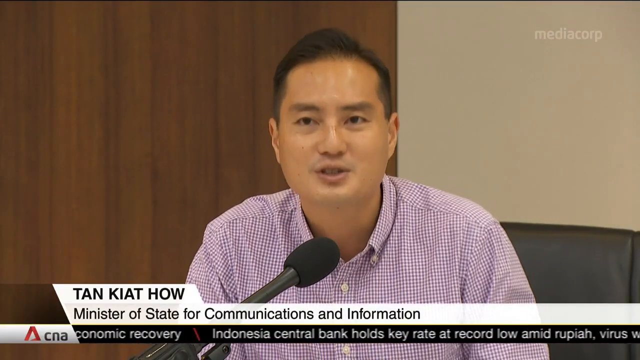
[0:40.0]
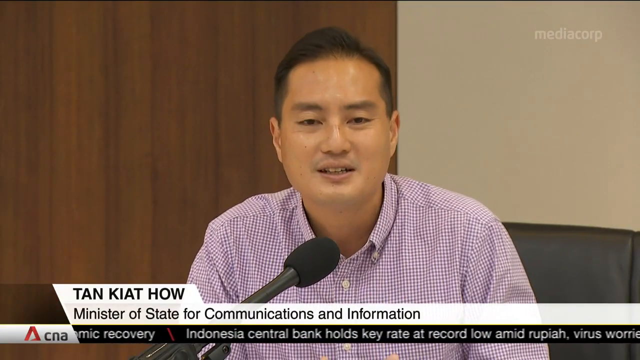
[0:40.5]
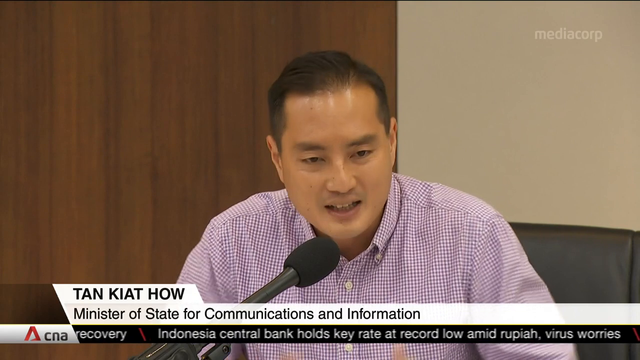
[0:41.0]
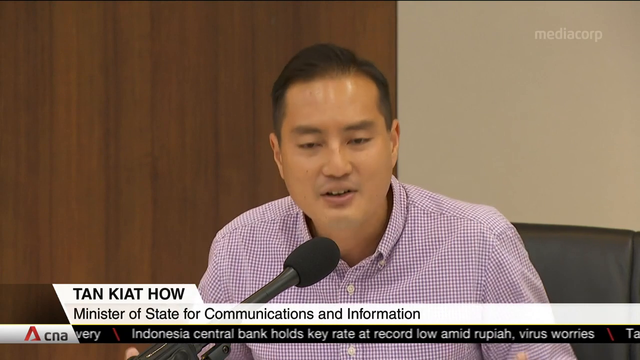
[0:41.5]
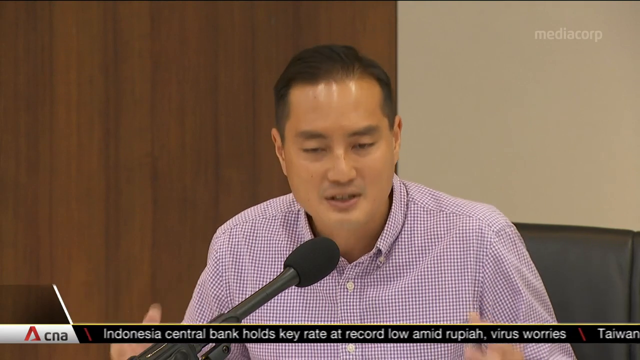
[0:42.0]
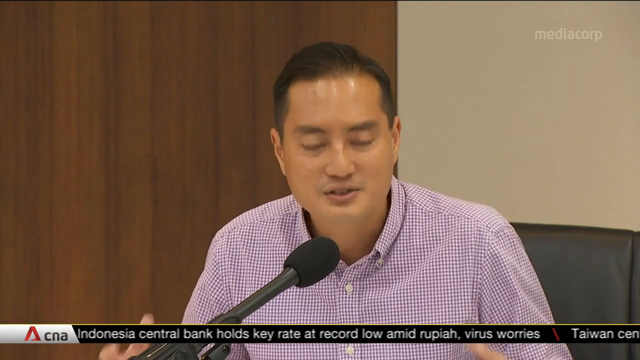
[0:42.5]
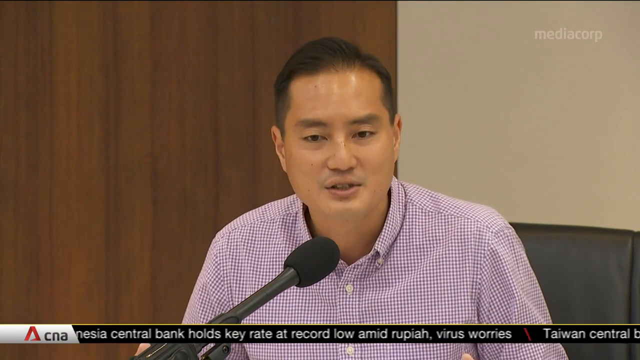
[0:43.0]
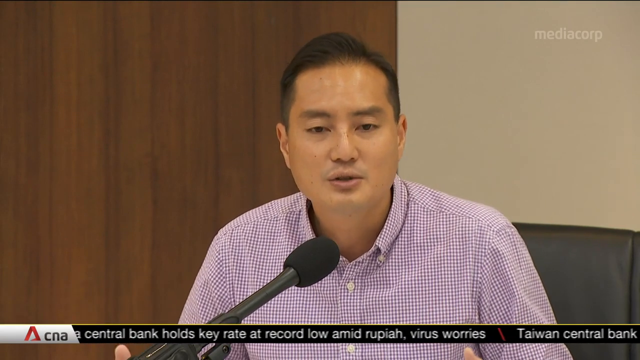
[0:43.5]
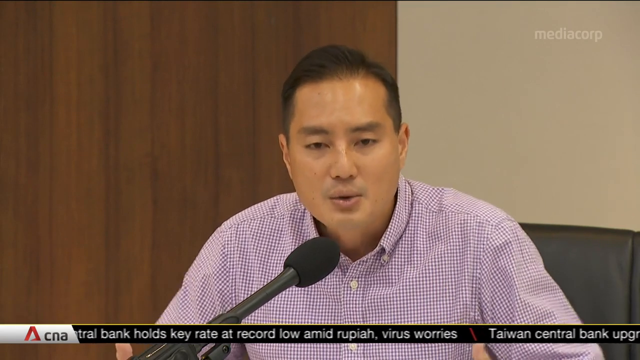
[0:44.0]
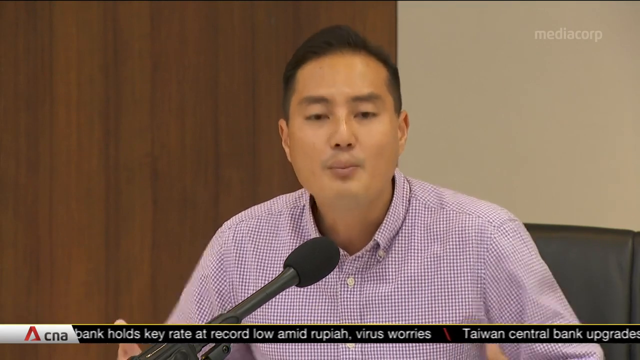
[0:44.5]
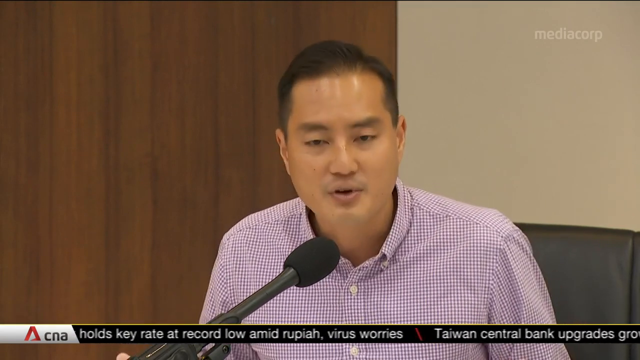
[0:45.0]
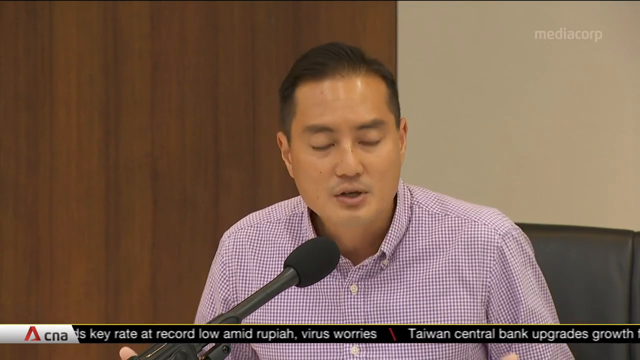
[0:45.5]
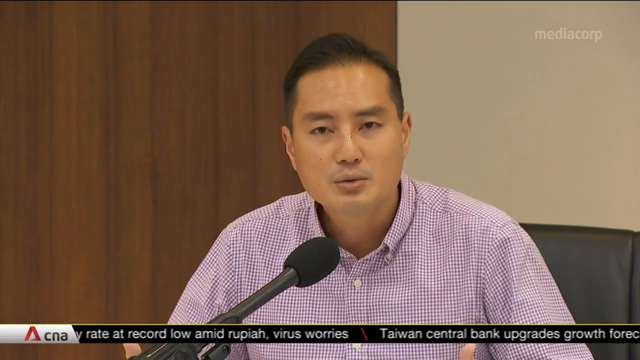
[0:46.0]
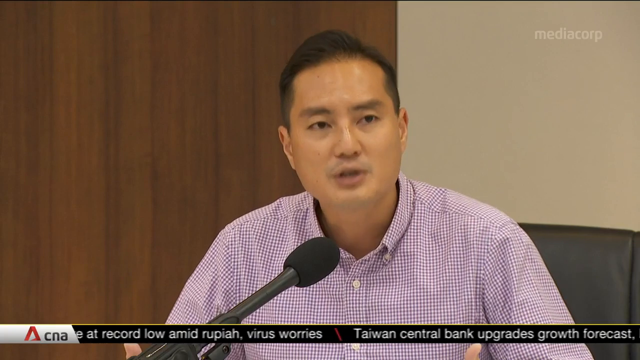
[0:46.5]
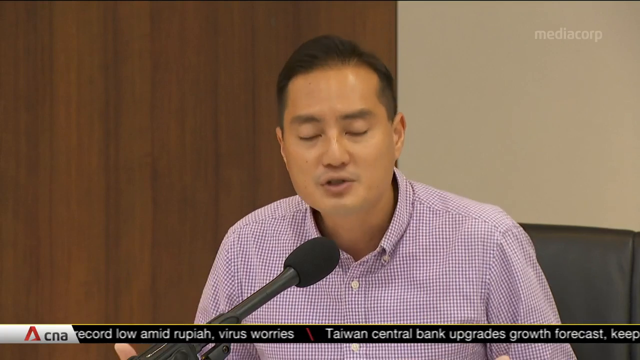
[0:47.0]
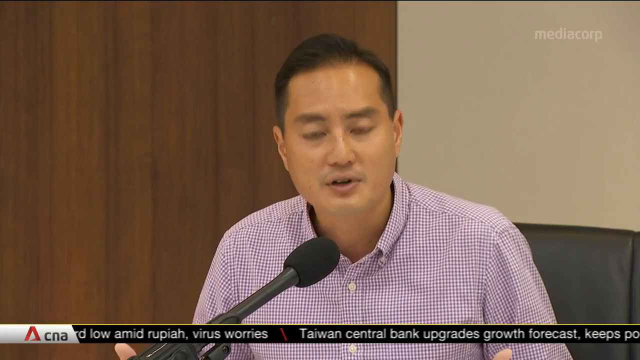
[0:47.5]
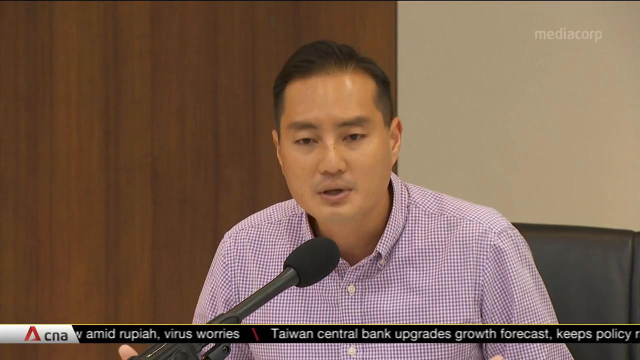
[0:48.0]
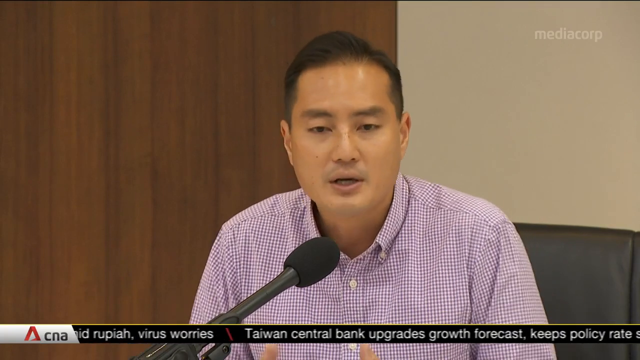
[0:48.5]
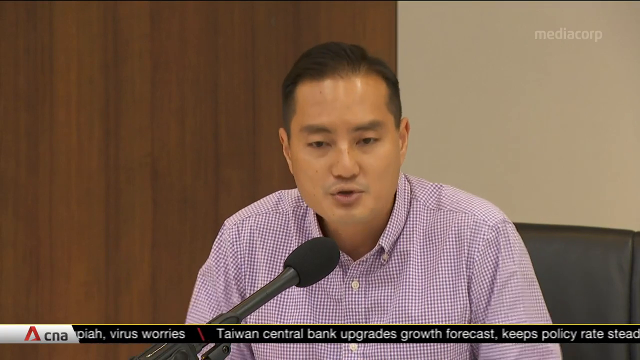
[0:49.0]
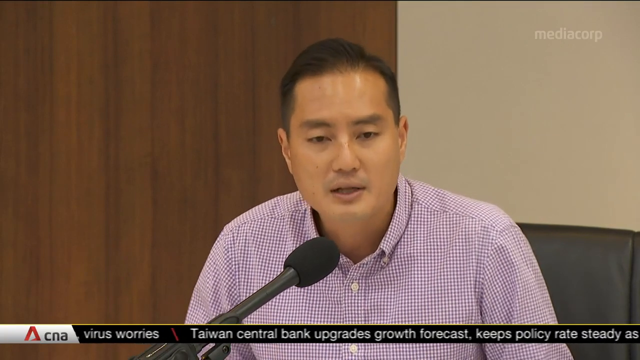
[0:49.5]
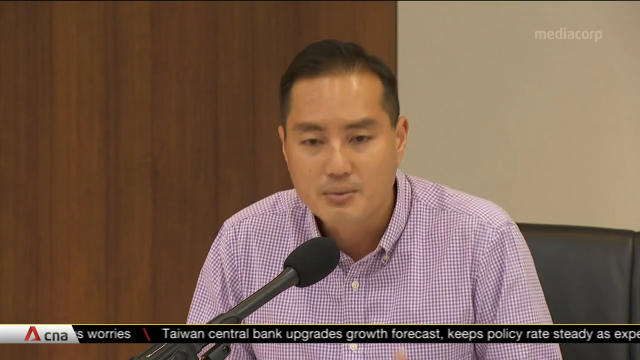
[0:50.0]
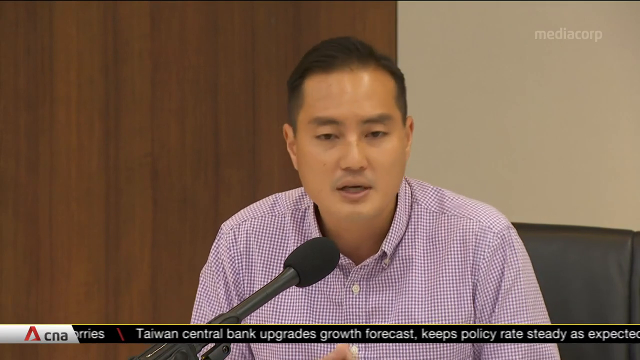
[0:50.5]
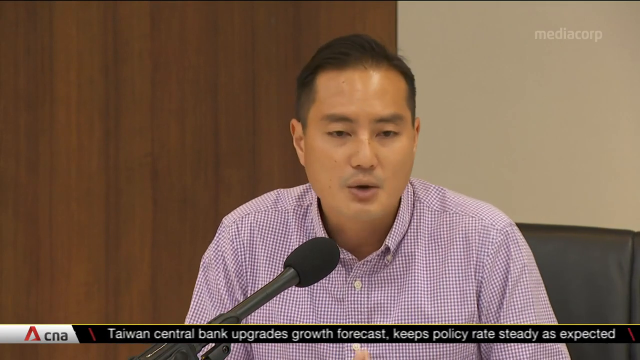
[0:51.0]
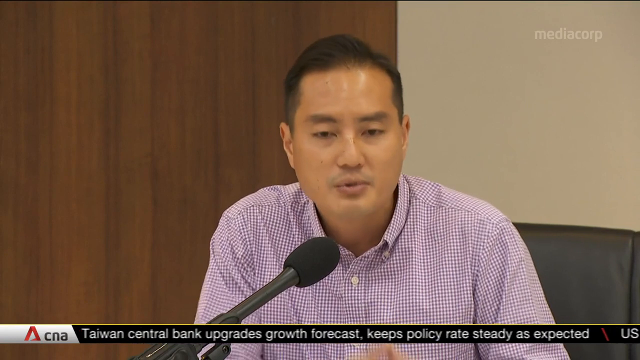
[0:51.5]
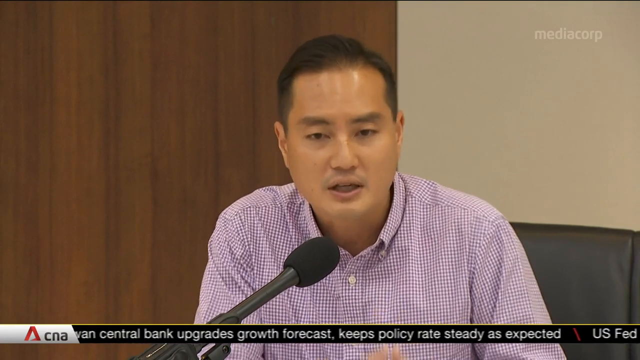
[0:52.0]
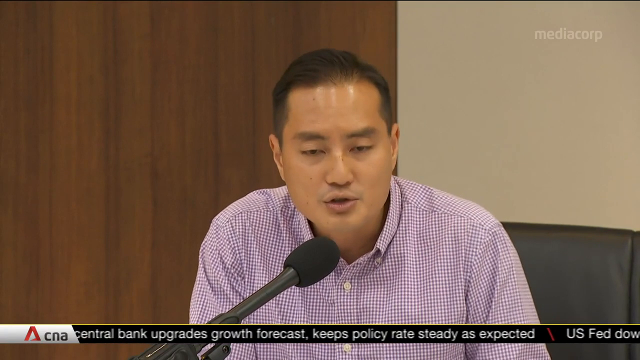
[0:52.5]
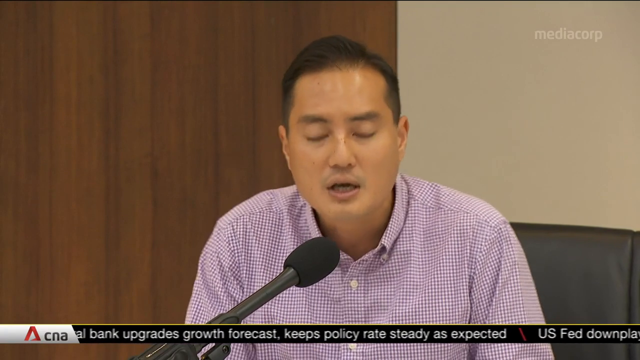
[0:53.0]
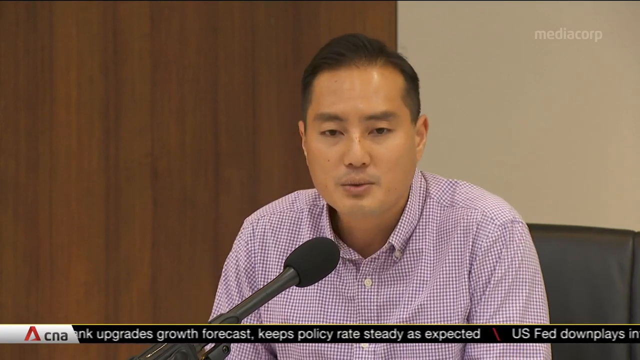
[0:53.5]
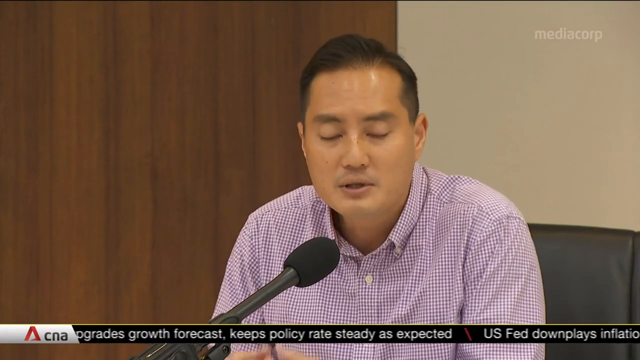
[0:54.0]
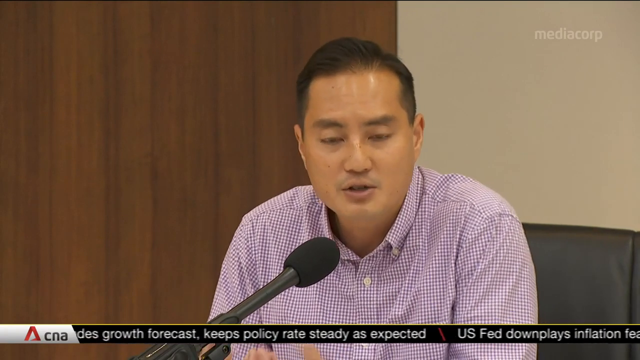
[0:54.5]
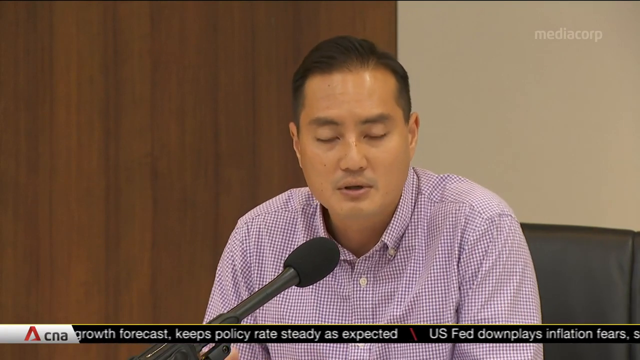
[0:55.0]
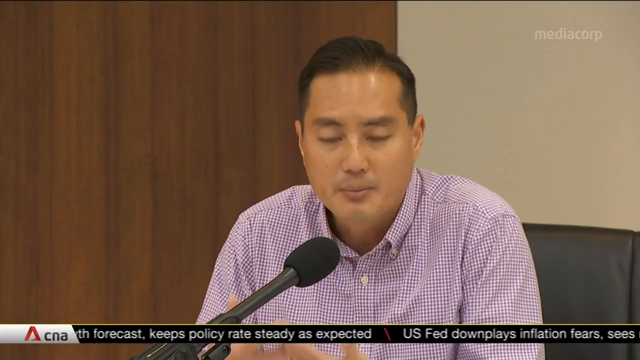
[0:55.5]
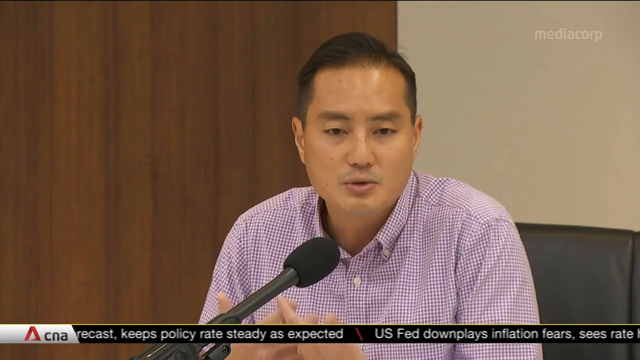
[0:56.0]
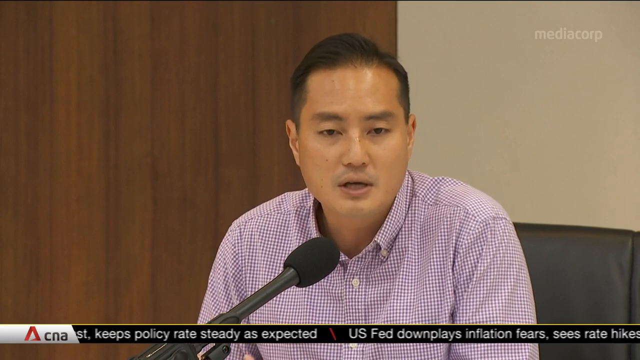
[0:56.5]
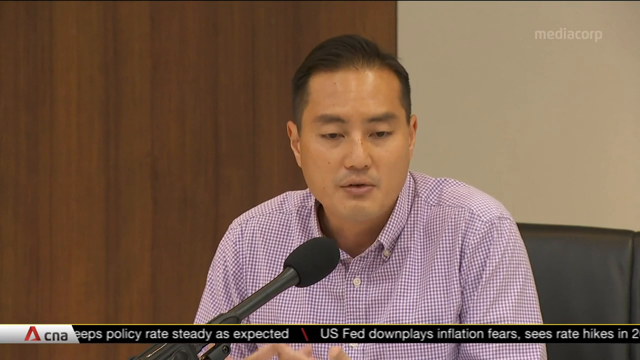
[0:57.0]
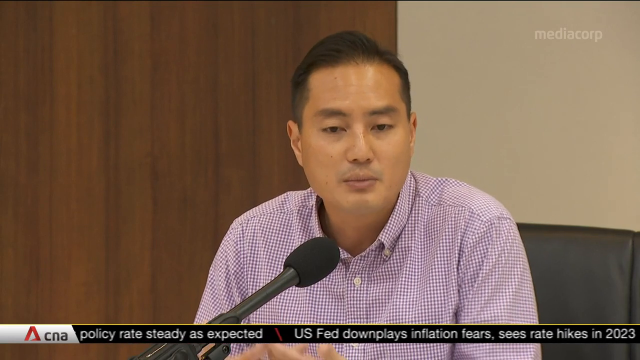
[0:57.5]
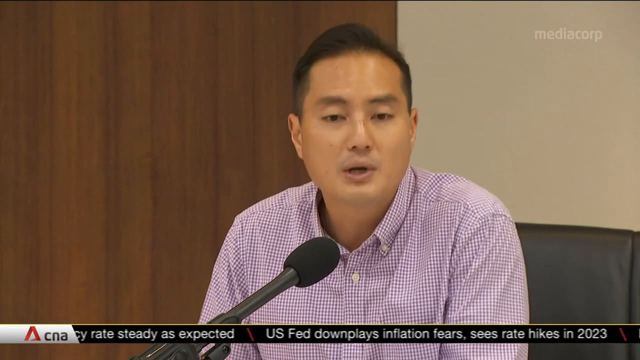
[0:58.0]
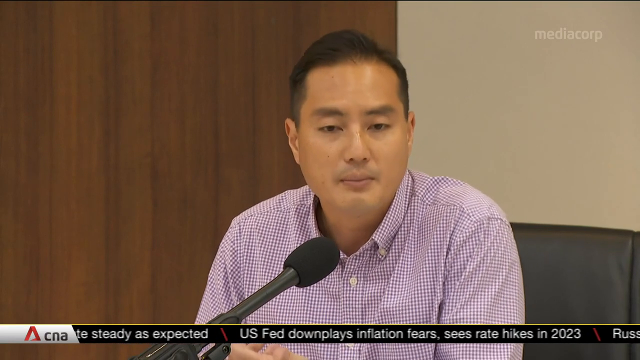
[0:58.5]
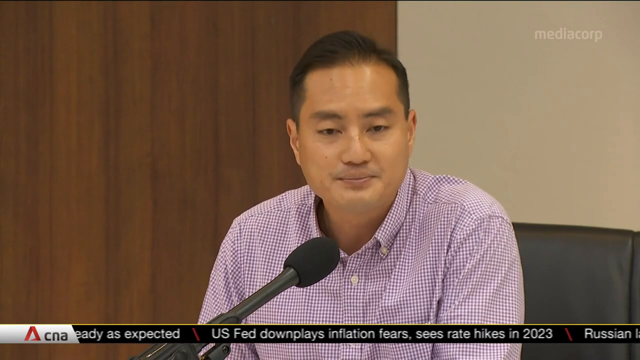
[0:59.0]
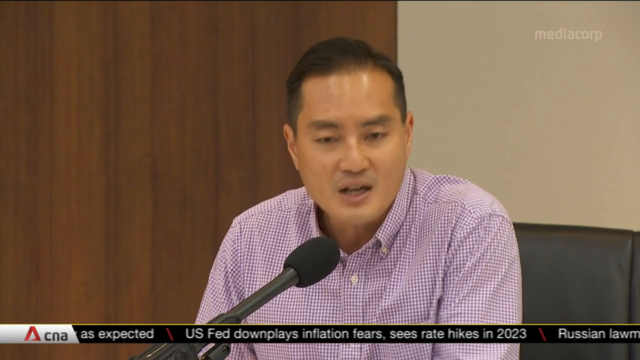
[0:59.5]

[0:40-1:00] The Minister of State for Communication is shown talking again.